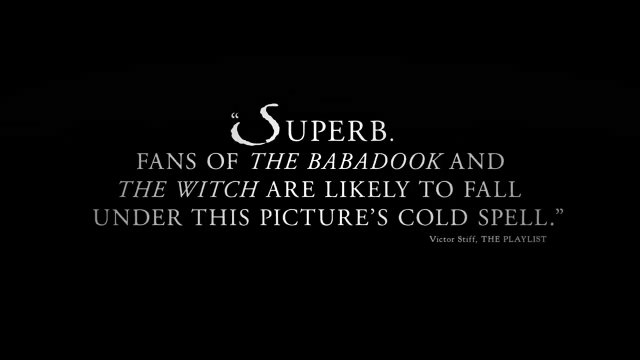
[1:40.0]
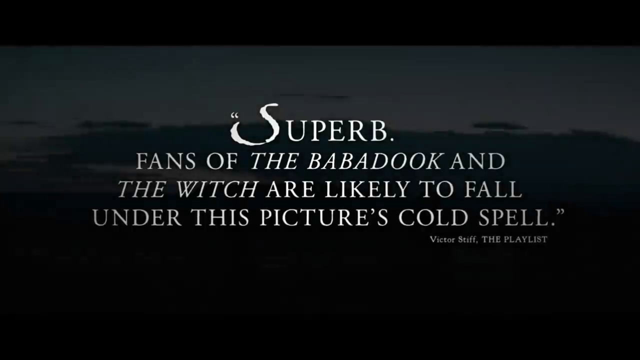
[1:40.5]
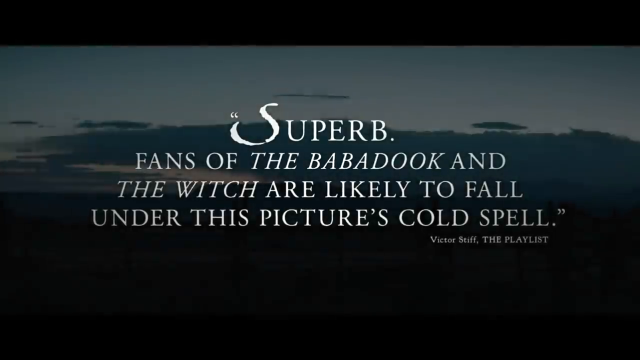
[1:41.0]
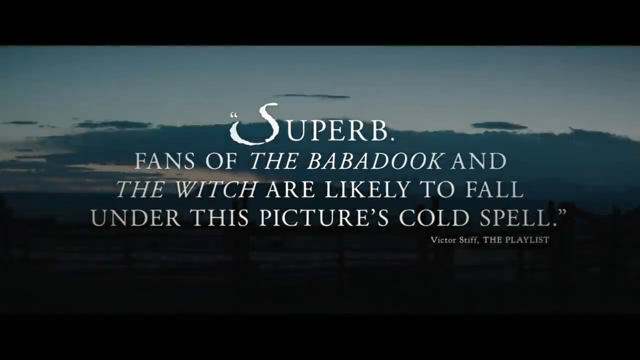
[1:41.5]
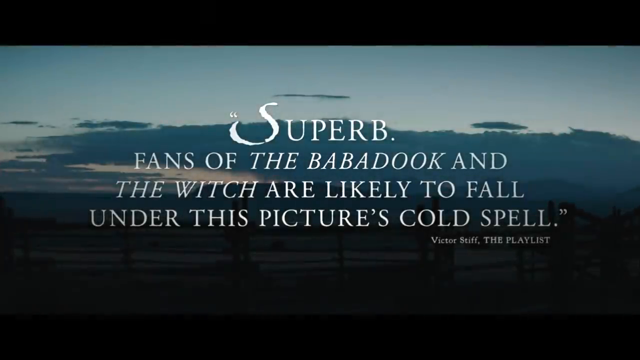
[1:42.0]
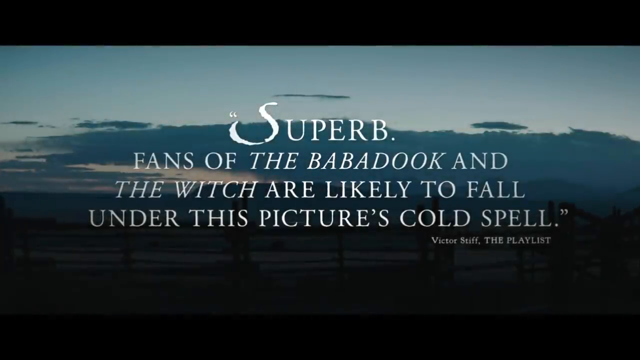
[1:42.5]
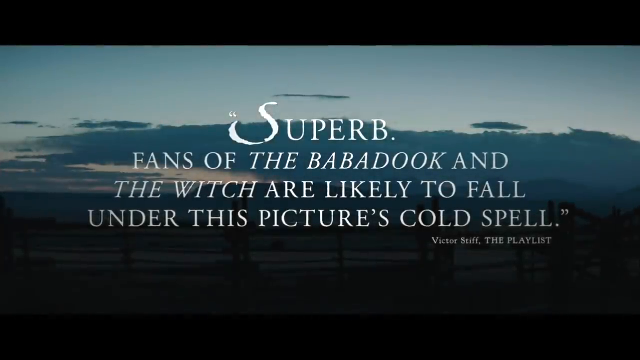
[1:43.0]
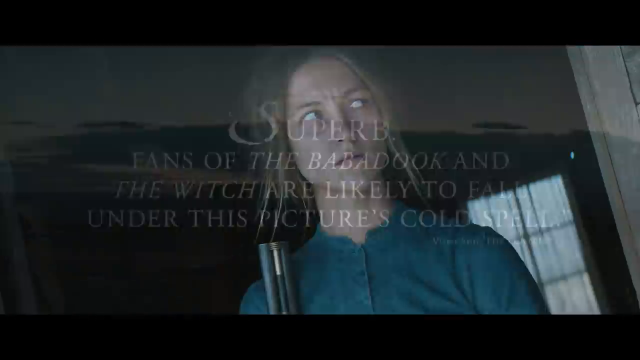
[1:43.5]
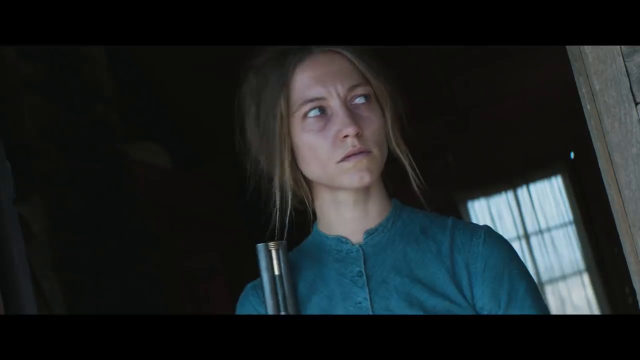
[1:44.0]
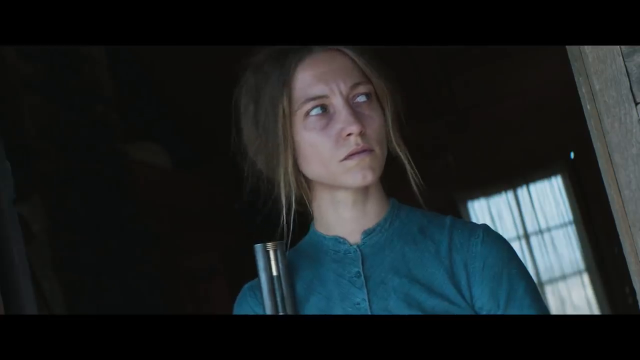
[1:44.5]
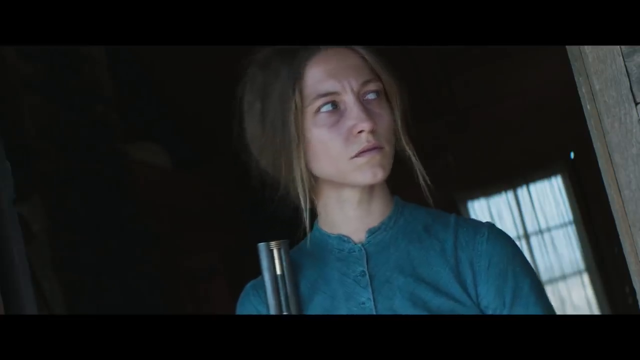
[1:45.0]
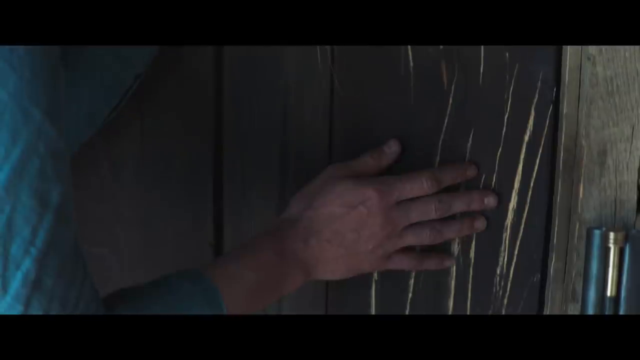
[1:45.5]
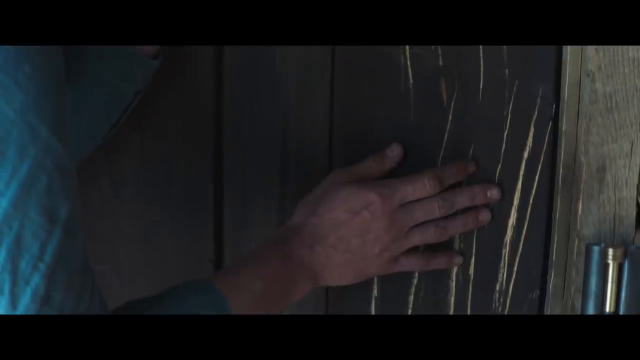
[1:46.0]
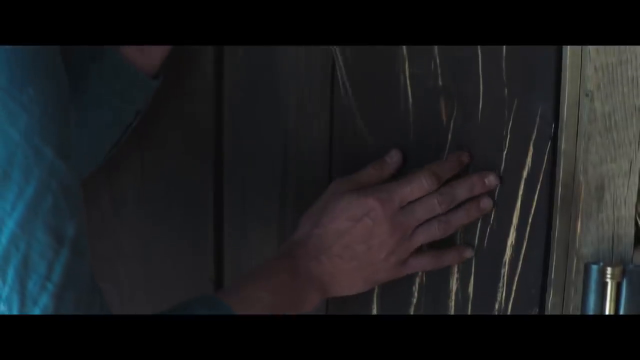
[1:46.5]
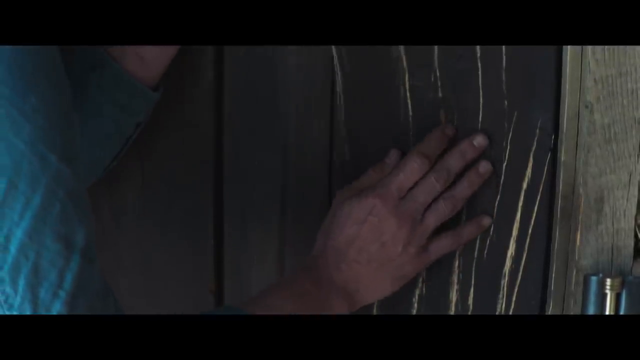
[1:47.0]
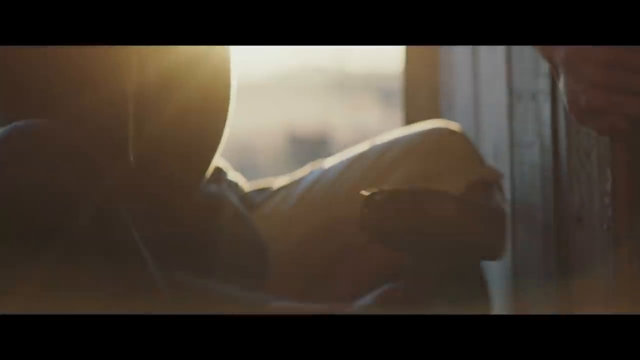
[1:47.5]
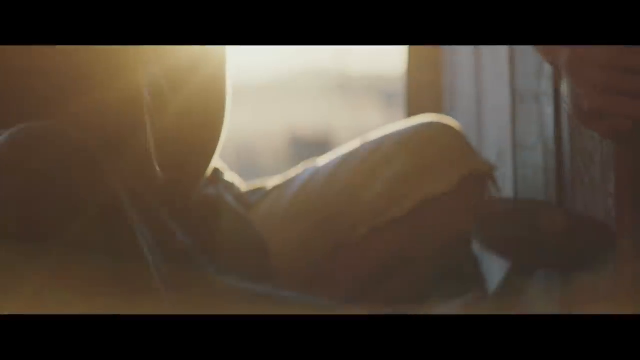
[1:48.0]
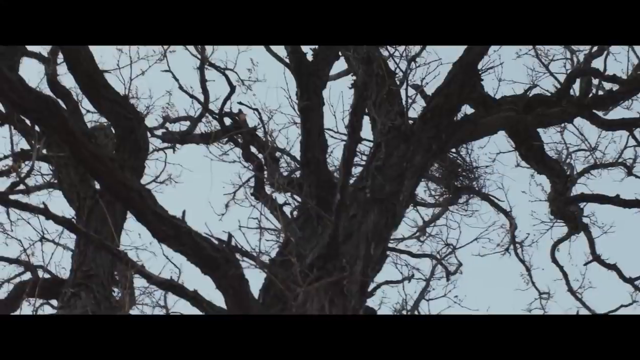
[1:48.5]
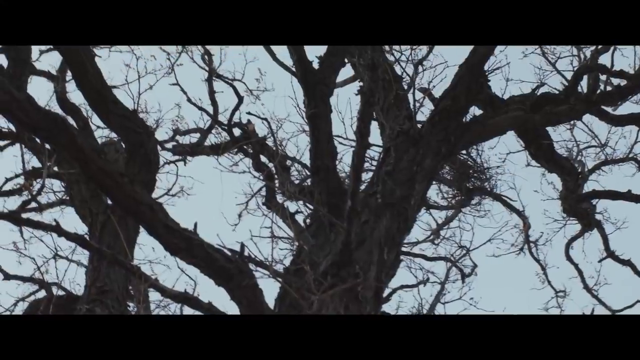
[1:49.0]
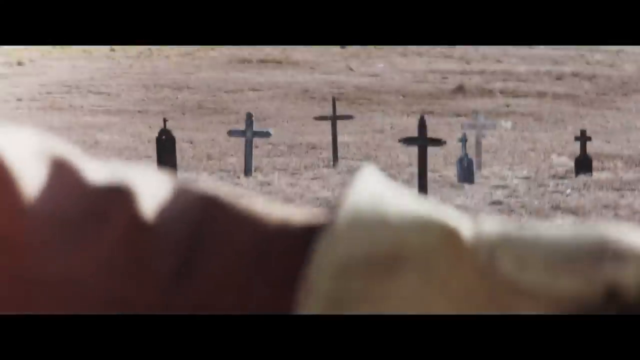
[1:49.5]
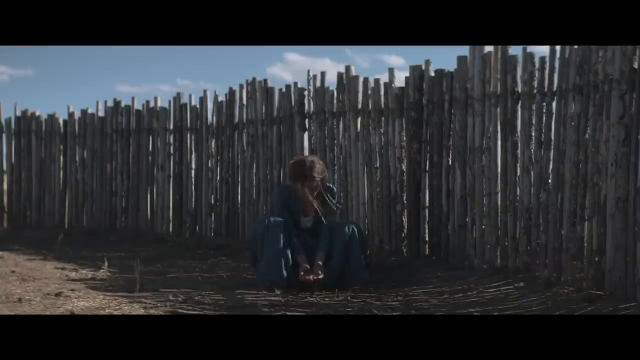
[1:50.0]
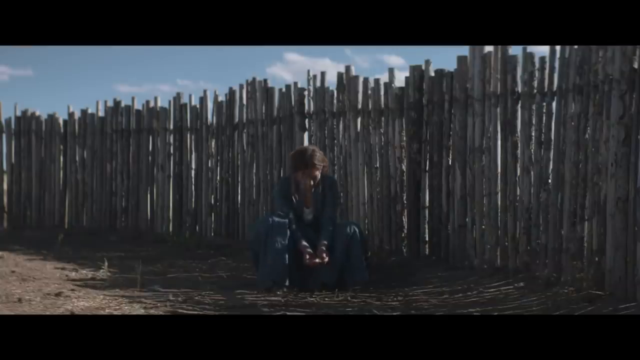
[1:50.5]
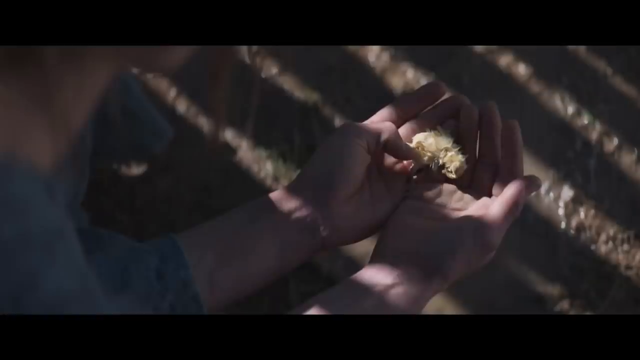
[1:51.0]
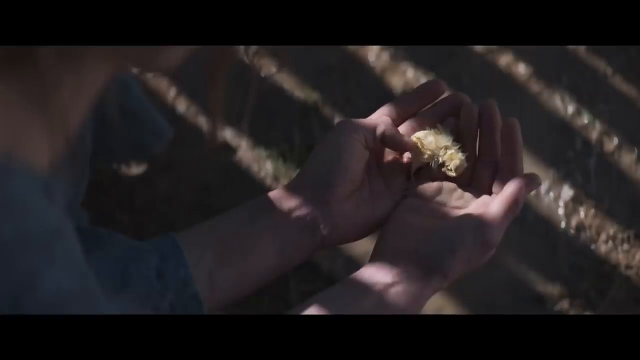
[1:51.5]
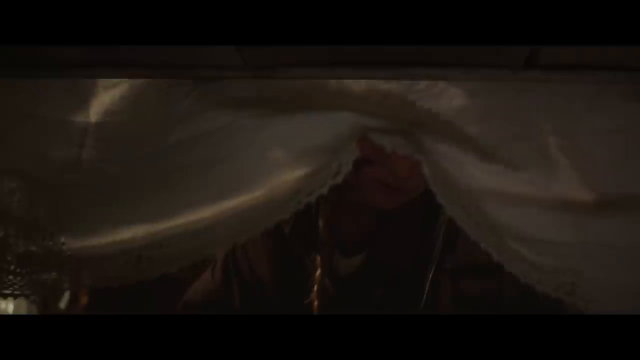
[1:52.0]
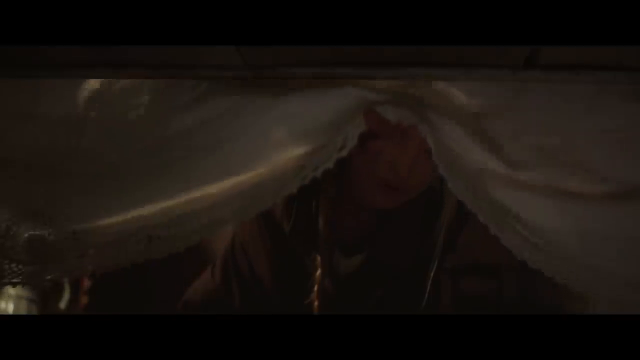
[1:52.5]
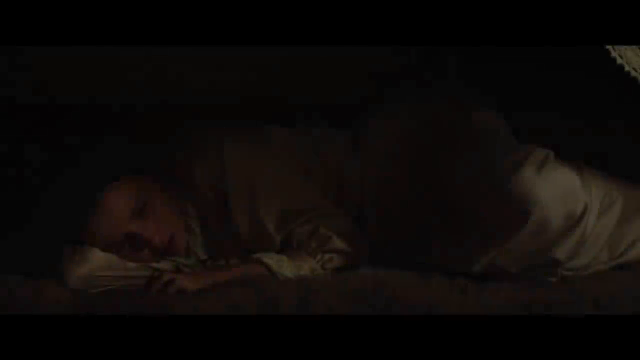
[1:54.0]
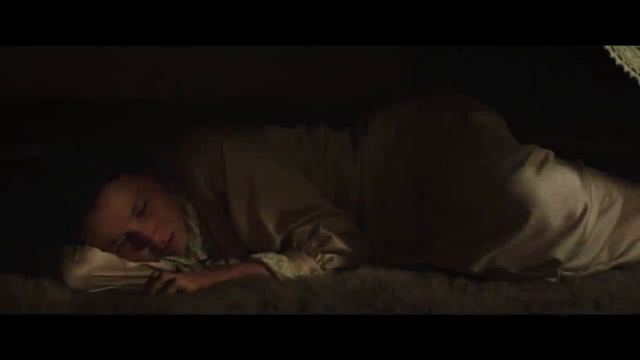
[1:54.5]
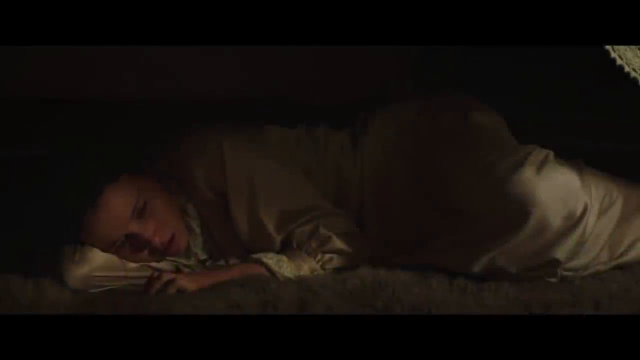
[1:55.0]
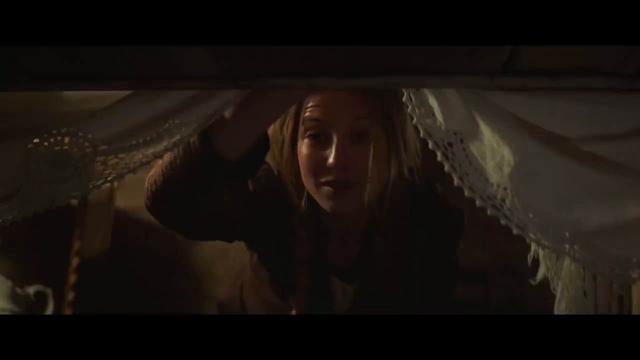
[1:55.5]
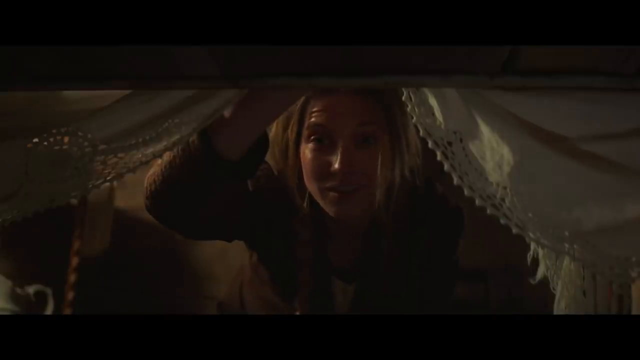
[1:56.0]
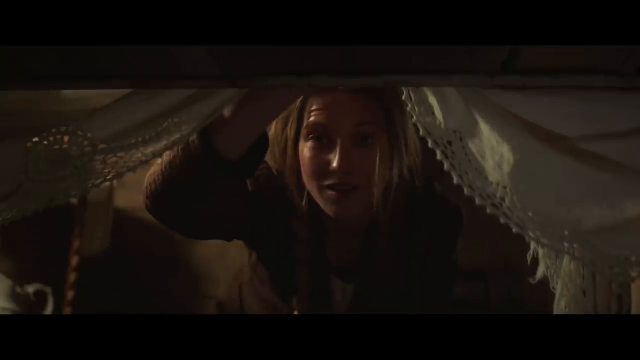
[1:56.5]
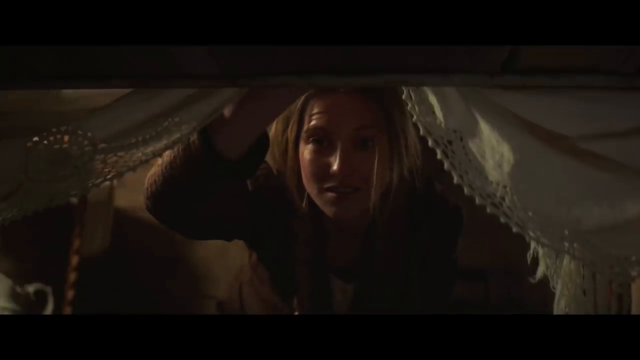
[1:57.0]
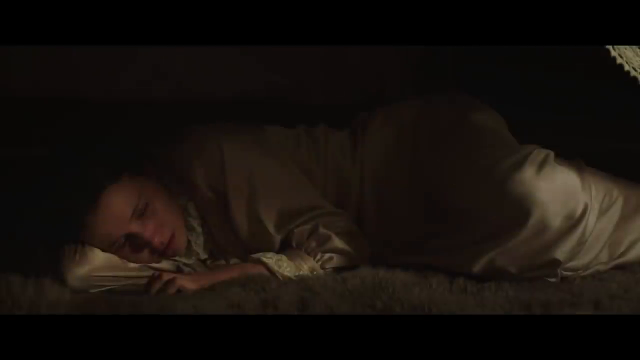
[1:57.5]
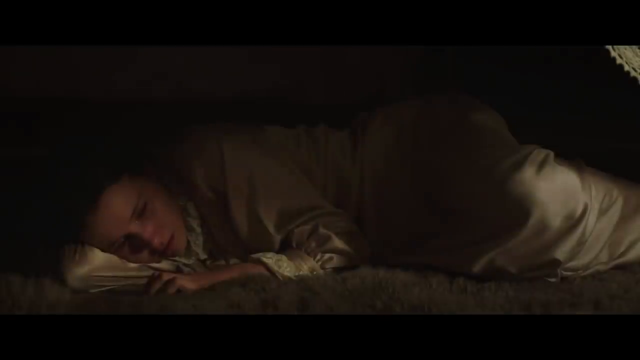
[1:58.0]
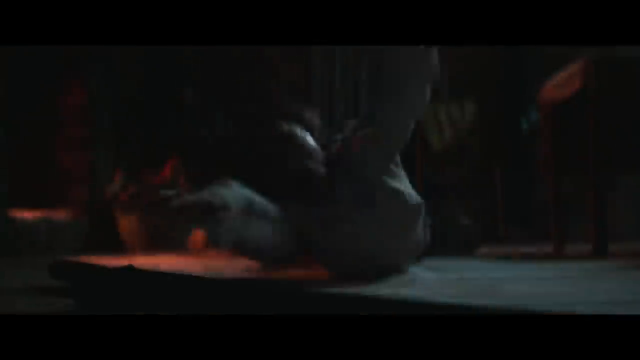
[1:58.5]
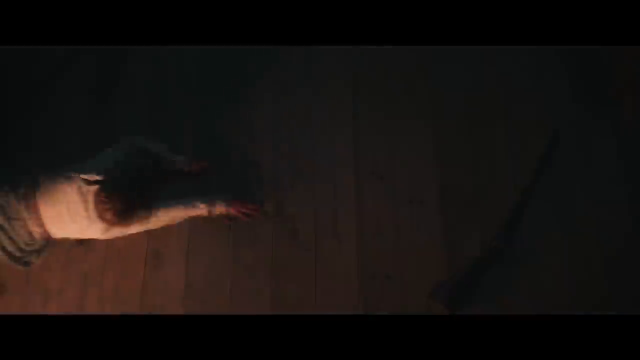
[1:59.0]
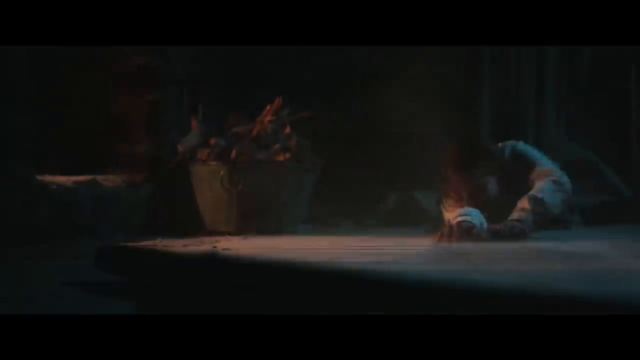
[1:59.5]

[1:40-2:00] A plain black screen shows white text: "superb fans of Babadook and the witch are likely to fall under this picture's cold spell." Next is a shot of the sky and the fence. The woman with brown hair, her hair very disheveled, wears a blue button-up type dress; her face looks somewhat purplish, almost like maybe she has been crying. She looks out and touches the wood along the fence with her hands; the wood looks like it has been clawed. Someone hammers some wood, and a very jagged, spooky-looking tree is shown. The shot cuts to dry prairie land with a simple cross, which looks like a home graveyard. The woman in the blue dress with the lighter hair stands by the fence made of sticks; it looks like she has found a flower. Someone appears to reach and look underneath some fabric, apparently under a table. Someone is talking to the young lady, and then suddenly someone gets dragged across the floor.